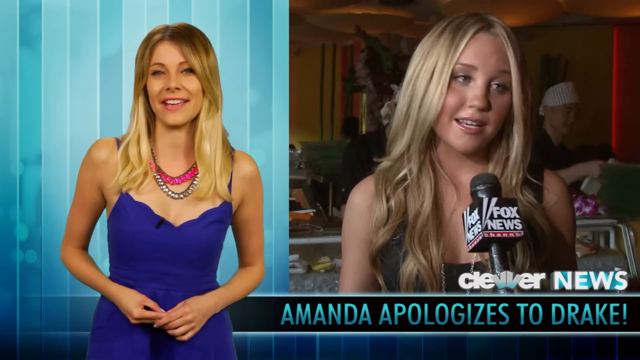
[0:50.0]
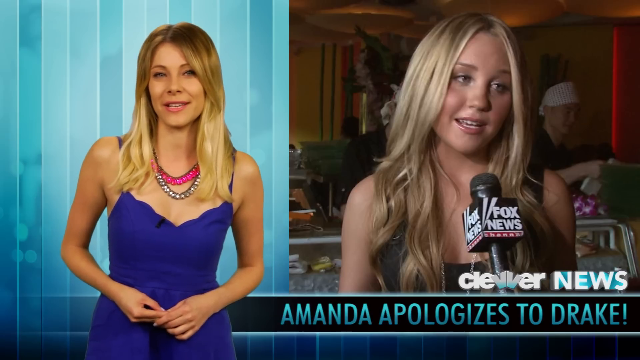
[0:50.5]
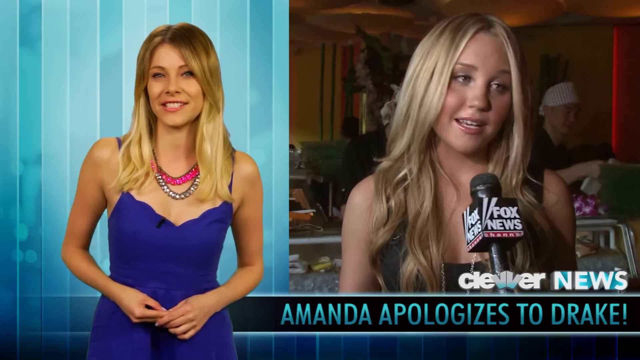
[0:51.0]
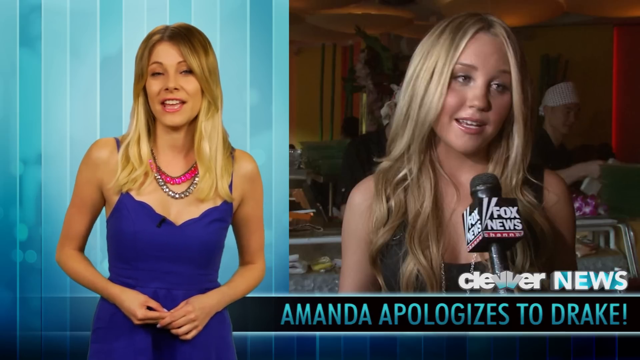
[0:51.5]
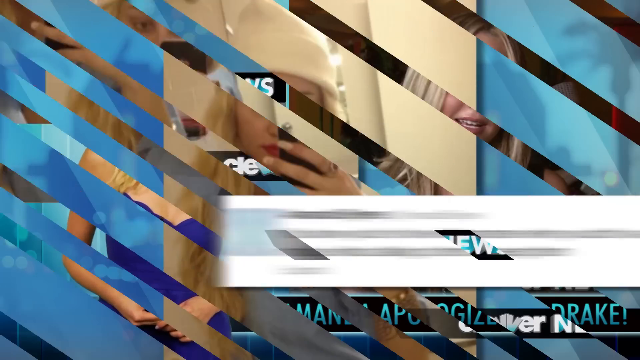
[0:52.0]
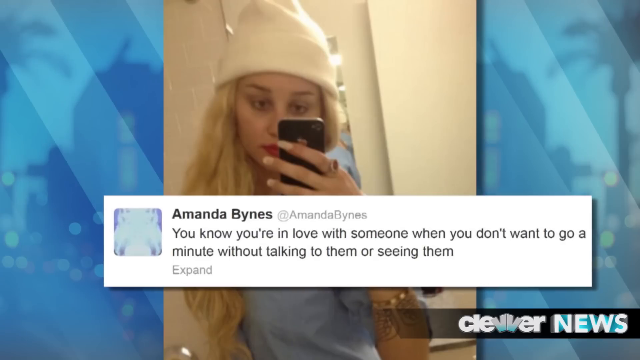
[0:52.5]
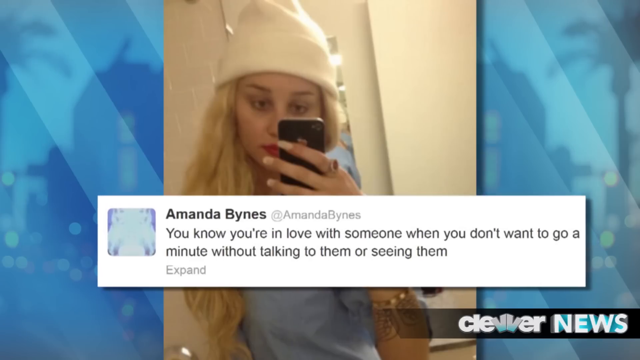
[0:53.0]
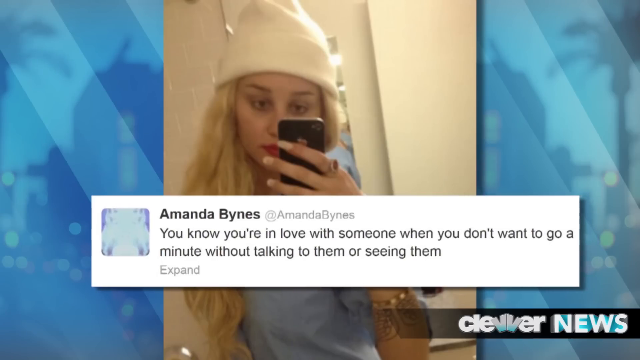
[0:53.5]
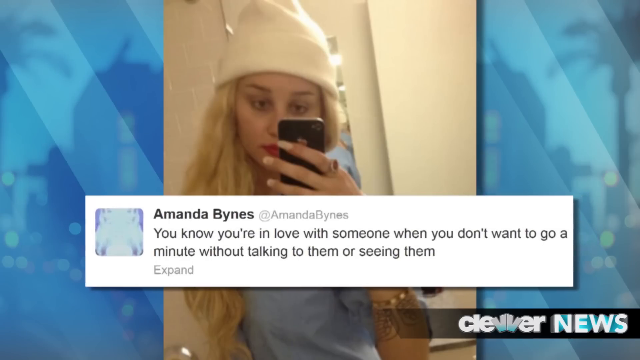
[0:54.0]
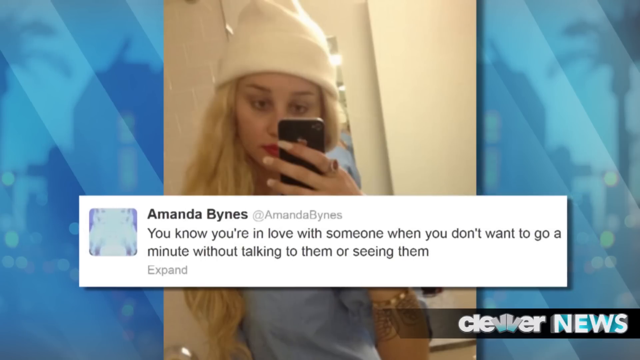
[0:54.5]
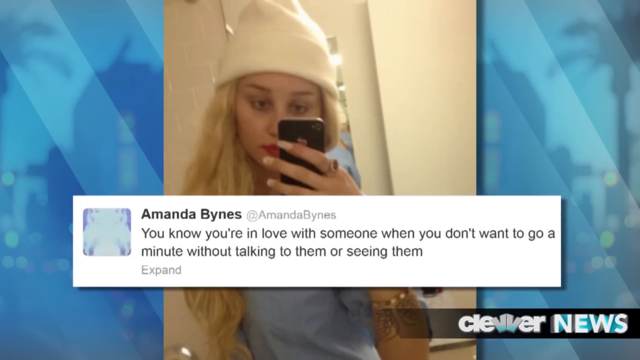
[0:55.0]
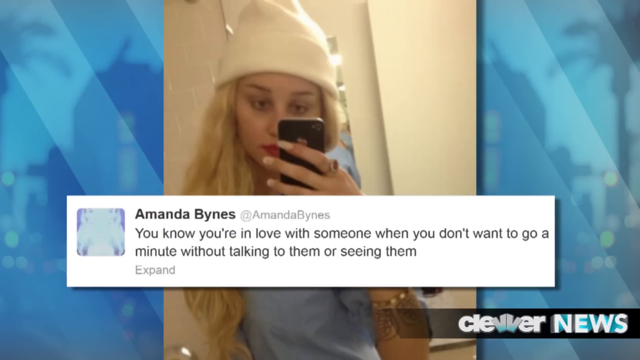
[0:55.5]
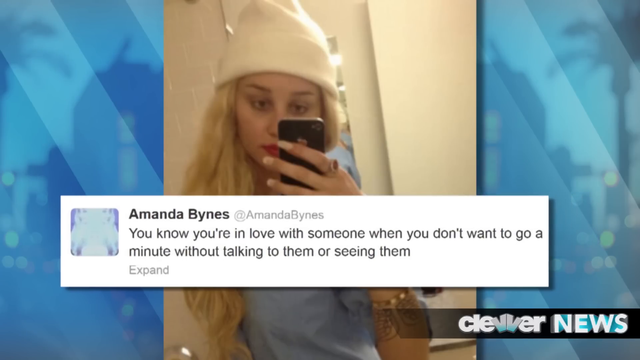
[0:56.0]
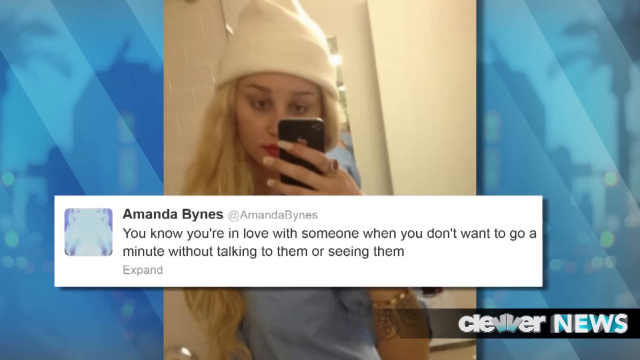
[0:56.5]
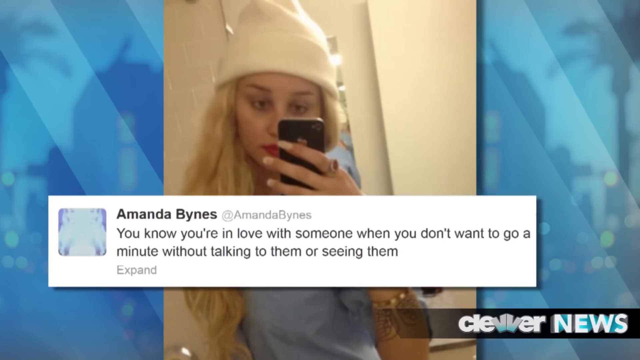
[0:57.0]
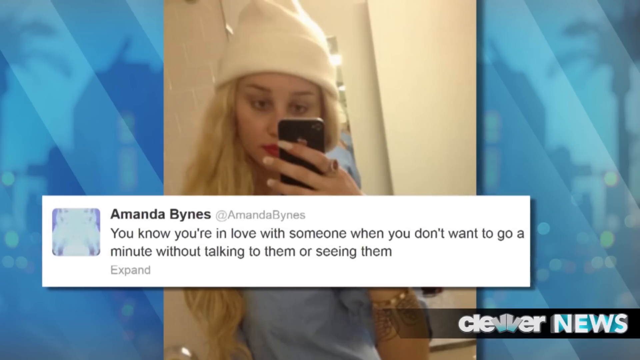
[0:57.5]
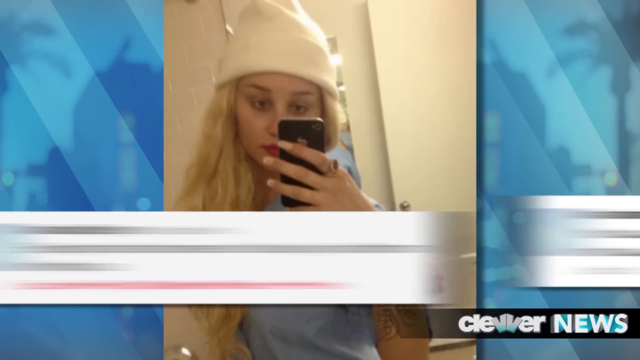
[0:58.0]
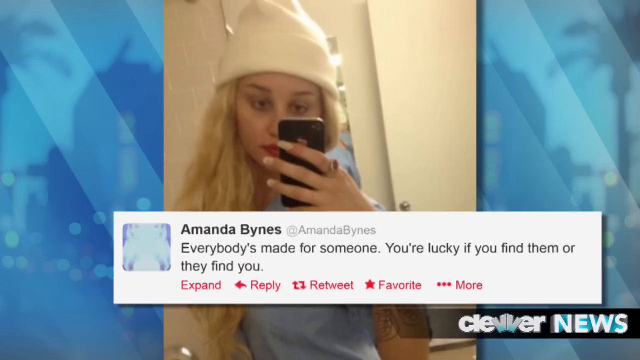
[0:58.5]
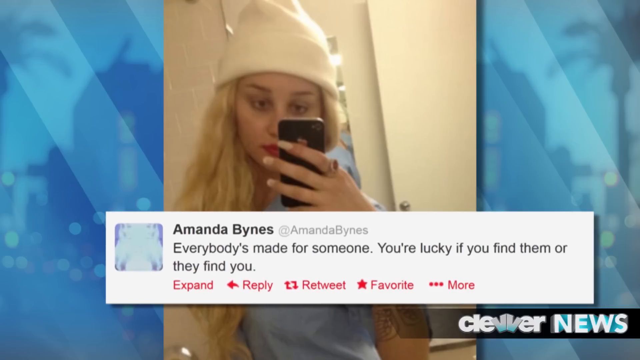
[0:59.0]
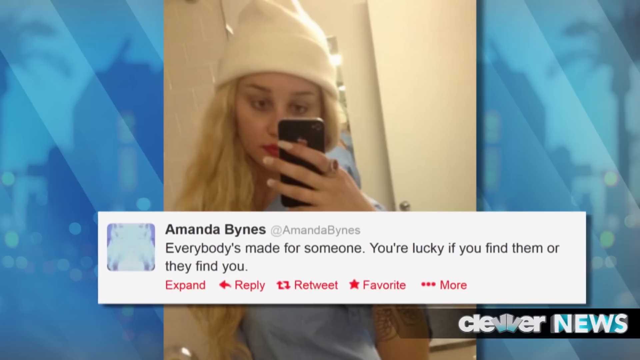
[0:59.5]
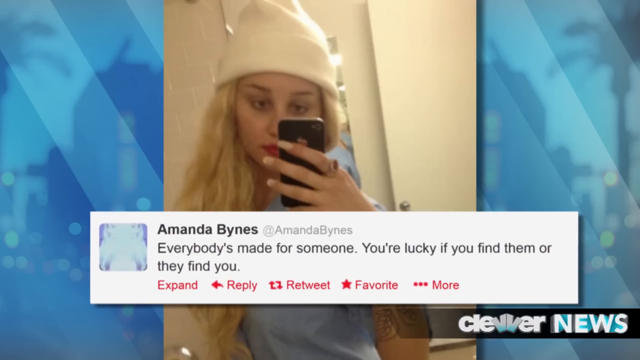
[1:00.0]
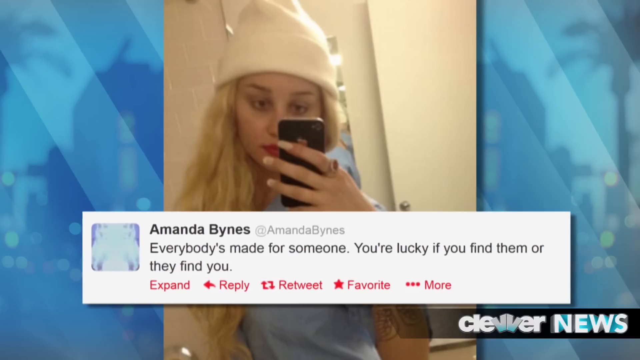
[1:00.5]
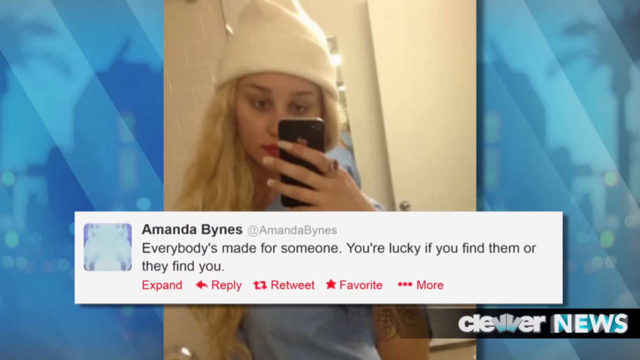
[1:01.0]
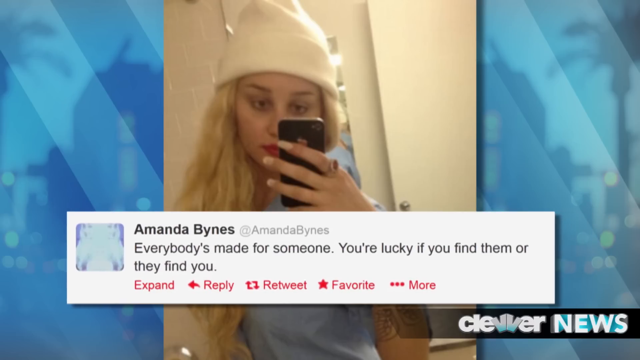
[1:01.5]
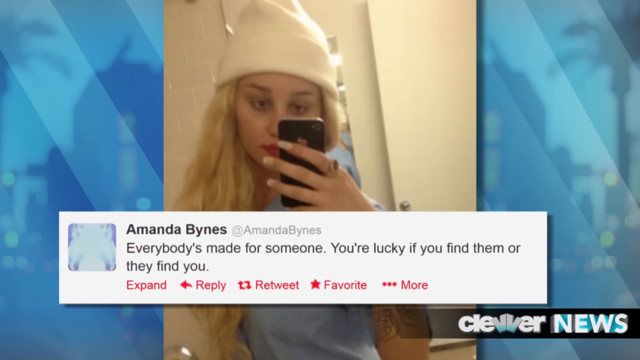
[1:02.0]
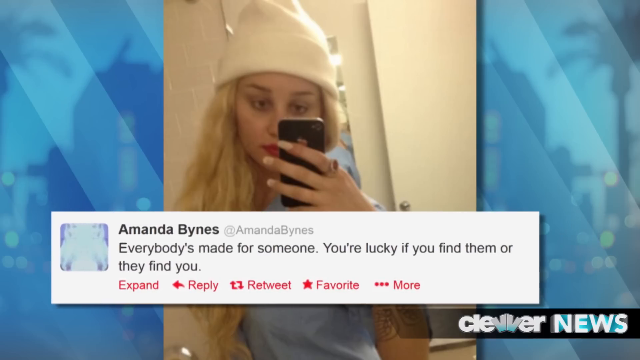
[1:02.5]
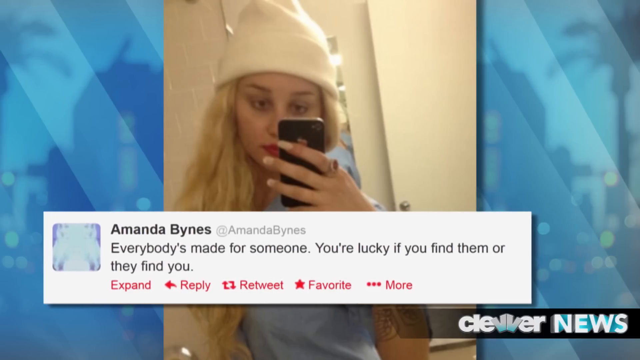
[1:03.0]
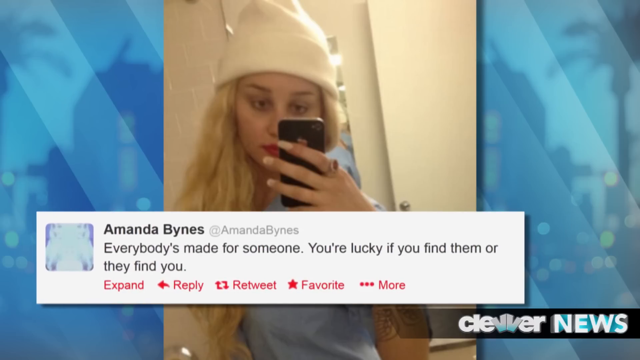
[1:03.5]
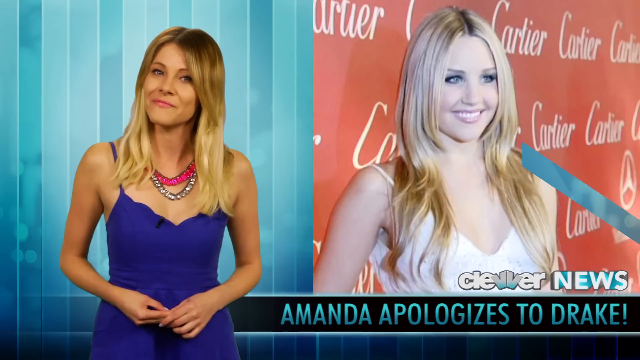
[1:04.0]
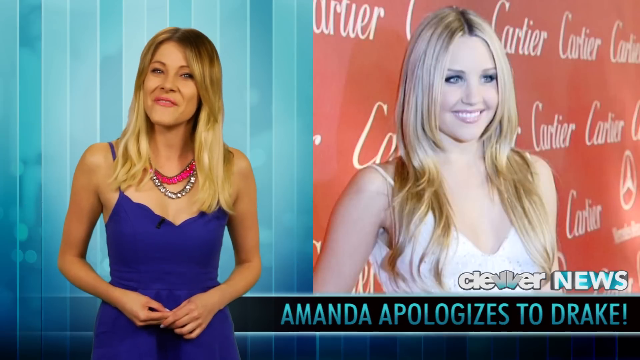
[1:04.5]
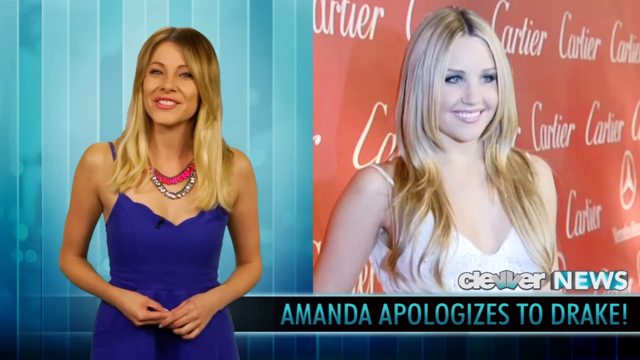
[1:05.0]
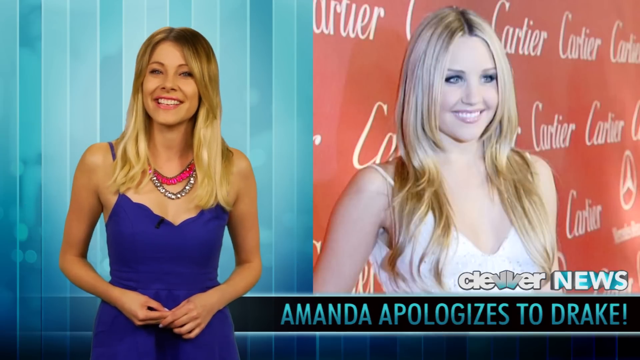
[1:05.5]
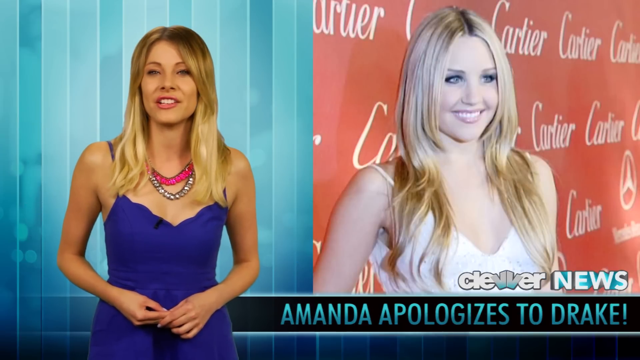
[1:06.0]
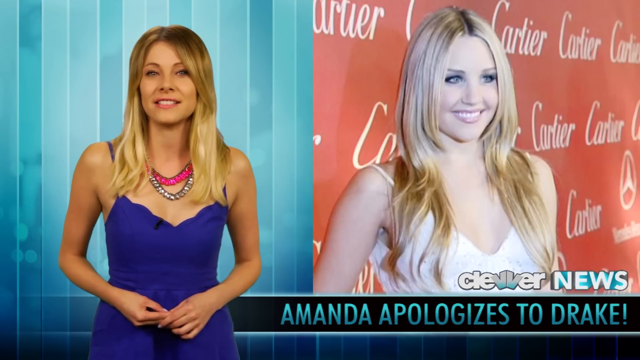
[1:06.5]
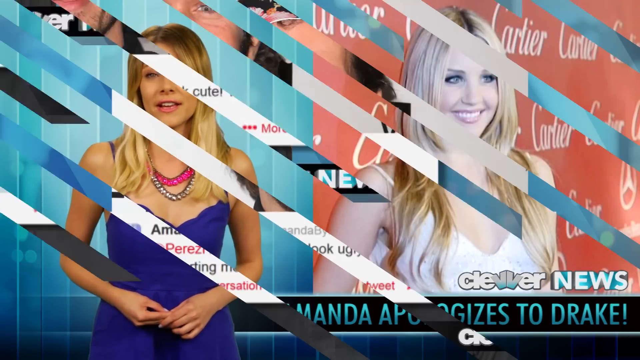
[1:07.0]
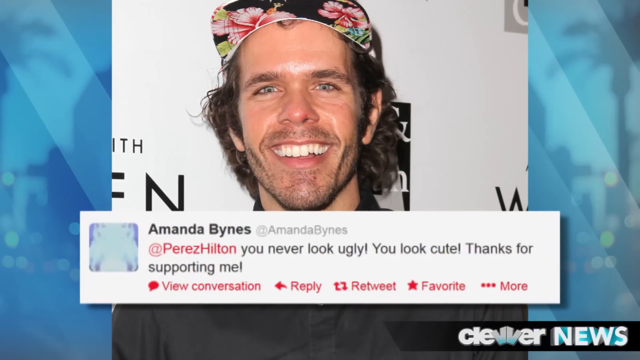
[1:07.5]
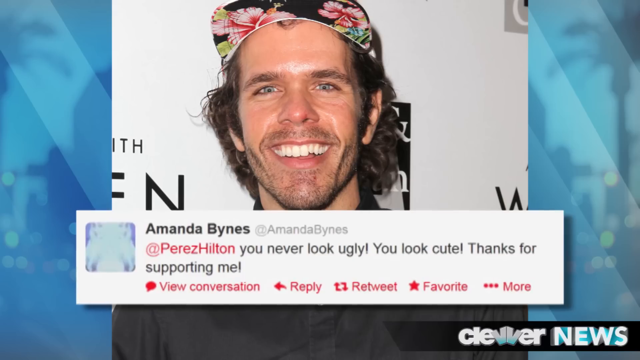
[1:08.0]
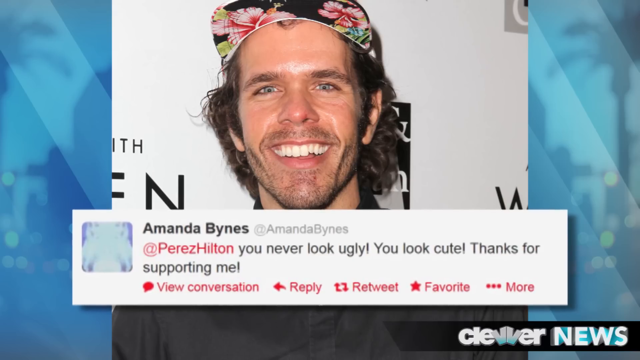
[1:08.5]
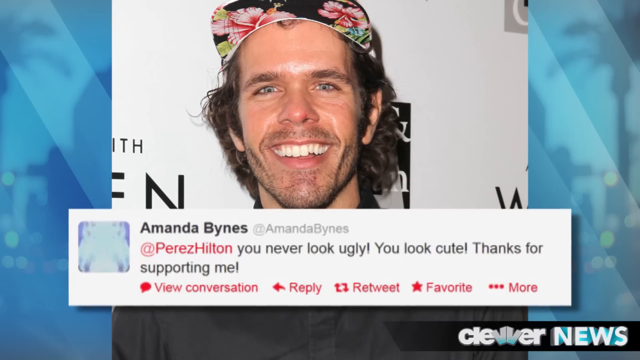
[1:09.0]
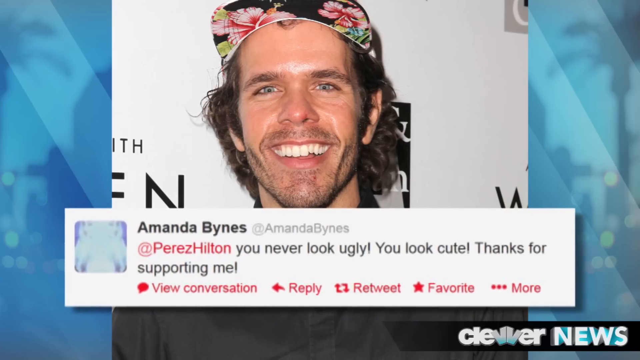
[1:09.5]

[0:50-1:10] Text reads "Amanda apologizes to Drake" by Clever News. A still image shows her being talked to by Fox News, and a lady on the left, apparently doing a news report, has blonde hair and a blue top and is very skinny. A picture of Amanda Bynes follows with her tweets: "you know you're in love with someone when you don't want to go a minute" and "everybody's made for someone, you're lucky if you find them or they find you." Another still image shows her in a white dress getting her photo taken, followed by her tweet "at Perez Hilton you never look ugly you look cute thanks for supporting me" and a picture of Perez Hilton smiling.